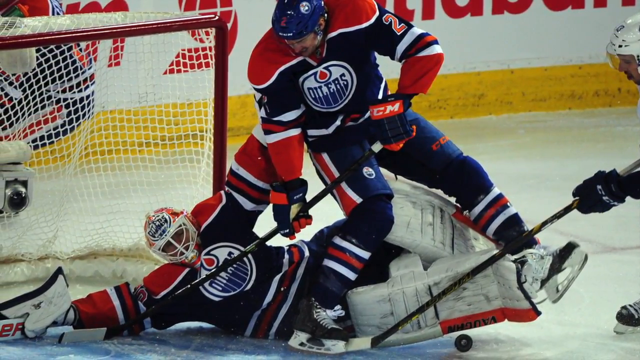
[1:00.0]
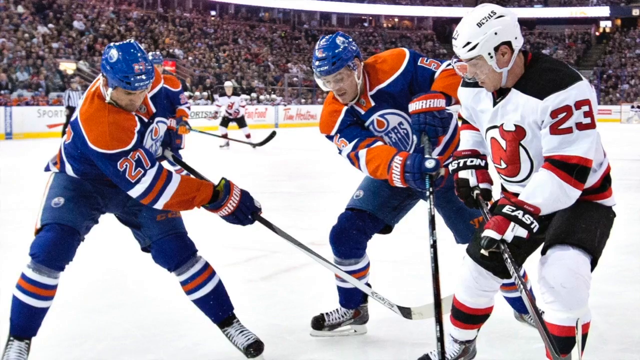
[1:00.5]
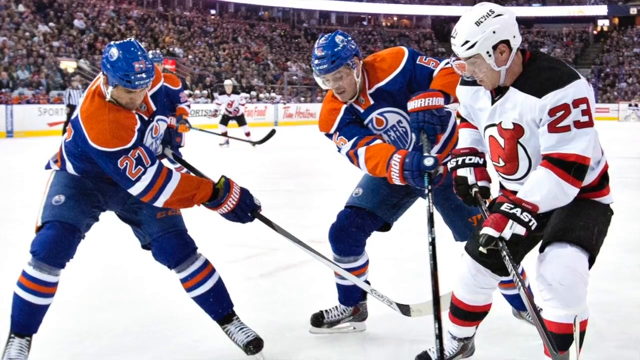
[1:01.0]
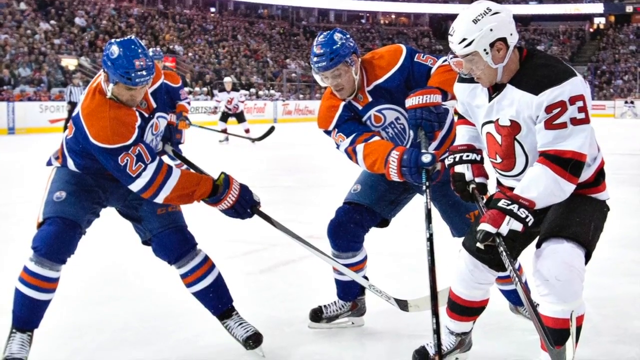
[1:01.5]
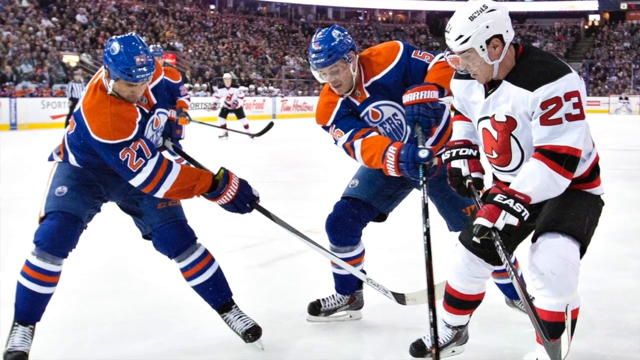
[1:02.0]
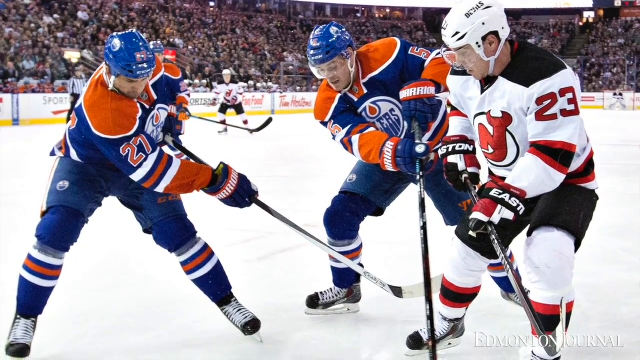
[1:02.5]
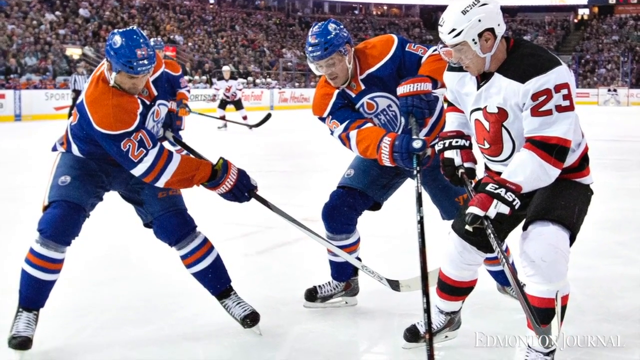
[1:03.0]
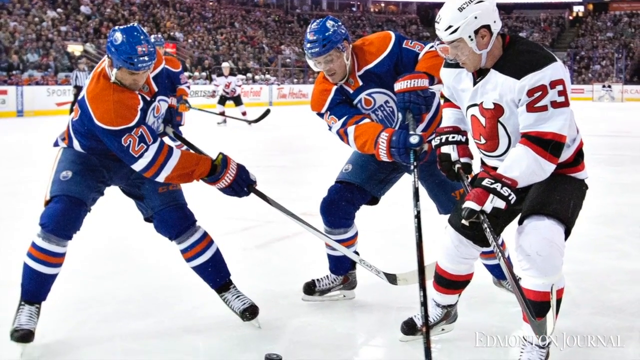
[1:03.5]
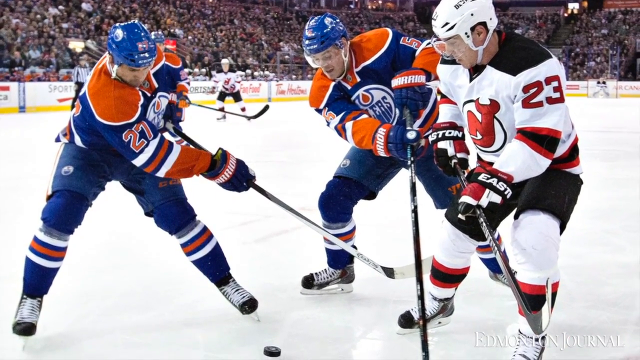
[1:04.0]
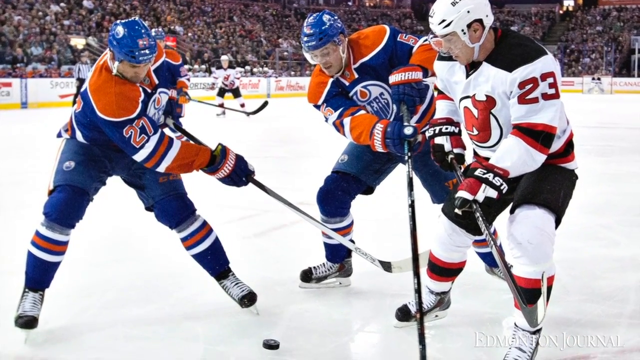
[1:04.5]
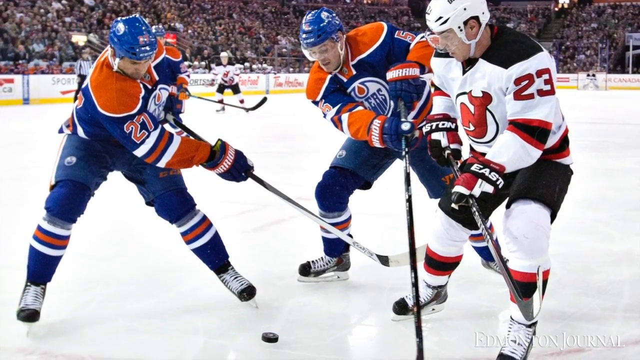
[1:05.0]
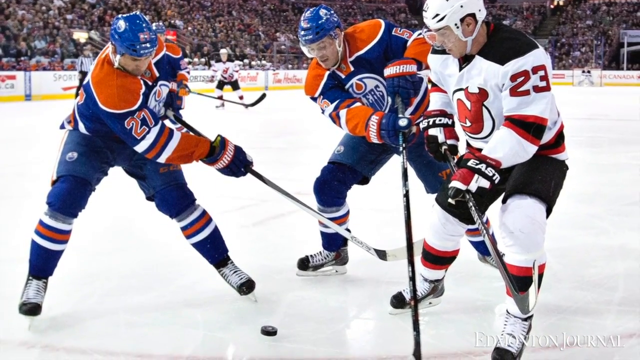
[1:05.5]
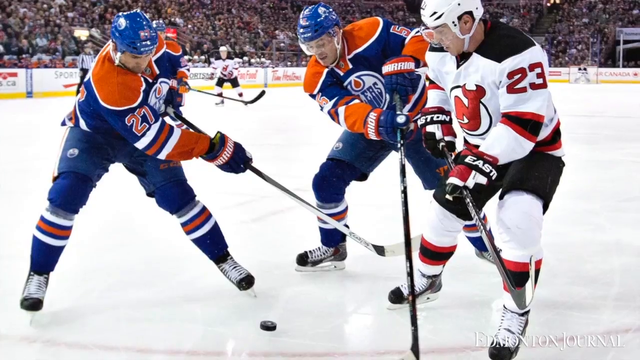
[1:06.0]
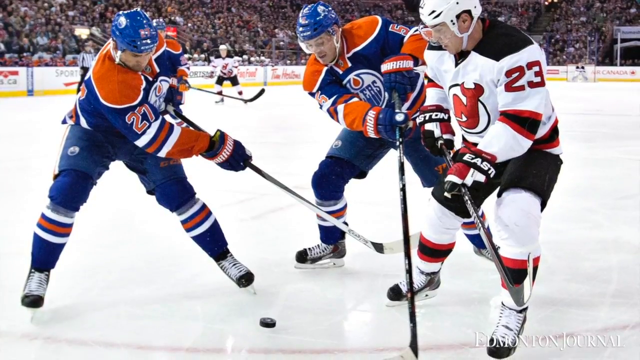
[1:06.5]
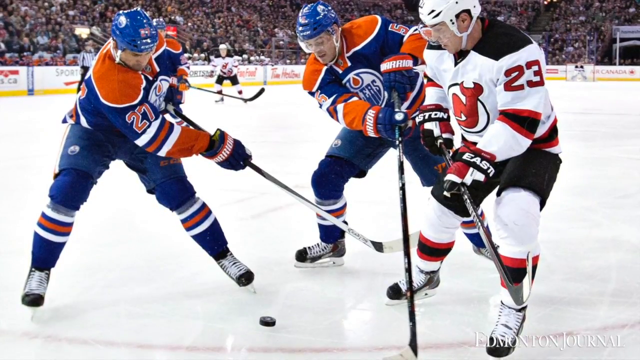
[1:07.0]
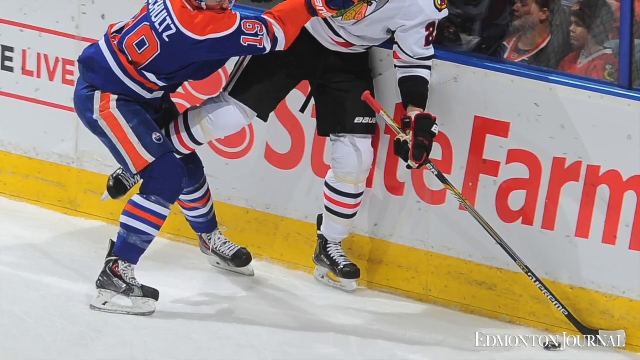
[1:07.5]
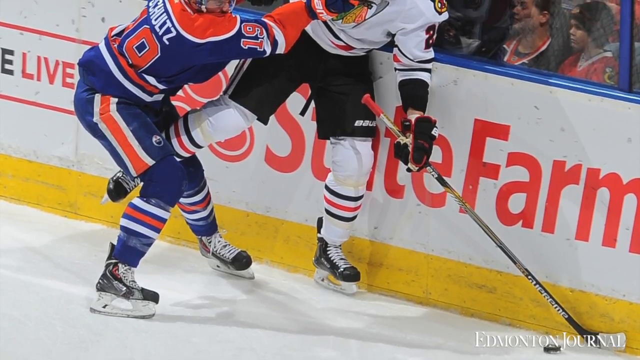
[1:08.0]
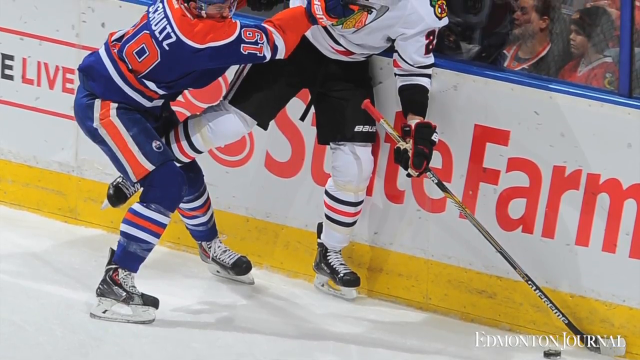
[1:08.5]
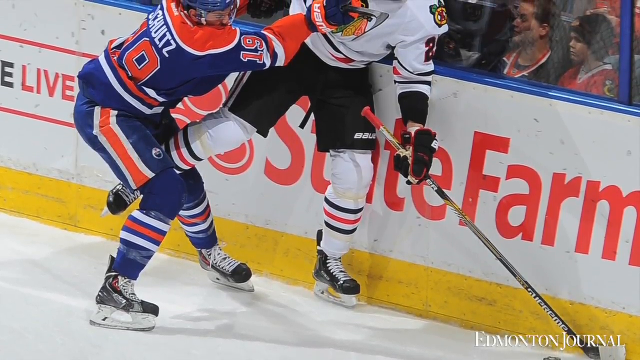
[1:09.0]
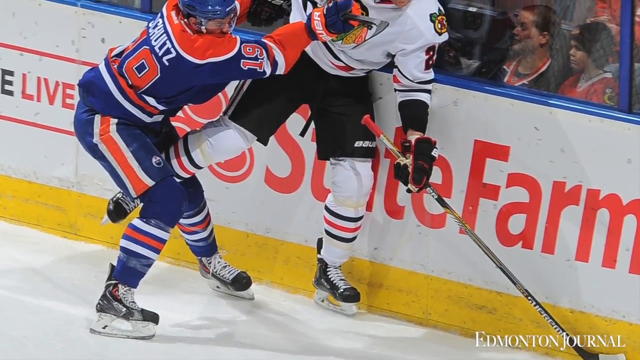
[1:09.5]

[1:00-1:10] Another still image shows two Oilers players on the left: number 27 on the far left and number 55. On the right is a New Jersey Devils player, number 23. All the players look down toward the center. The camera view shifts down, revealing a puck on the ice at the bottom center, and another New Jersey Devils player is in the background in the center. The scene changes to a battle between two hockey players: an Oilers player, number 19, on the left pushes the other player on the right up against the plexiglass and wall.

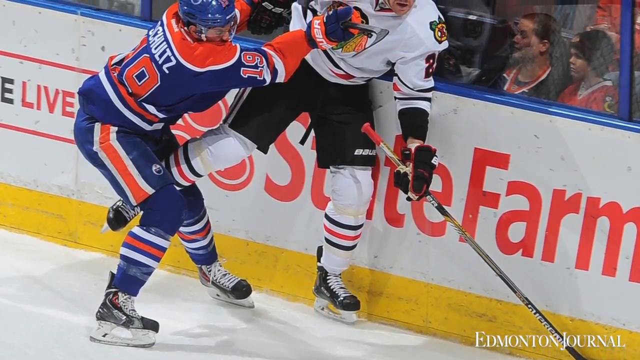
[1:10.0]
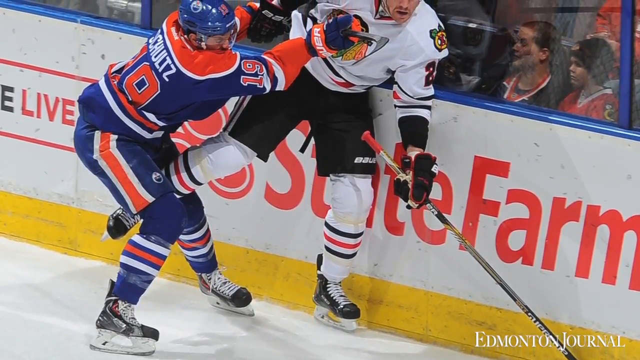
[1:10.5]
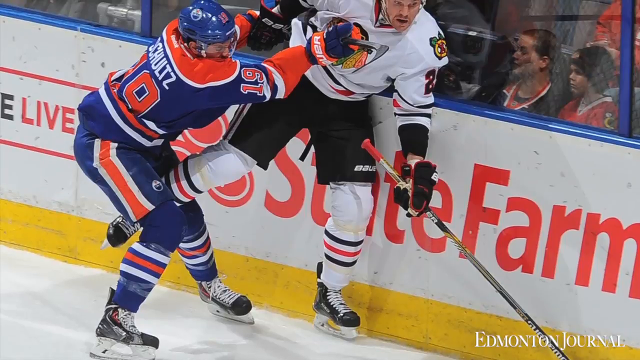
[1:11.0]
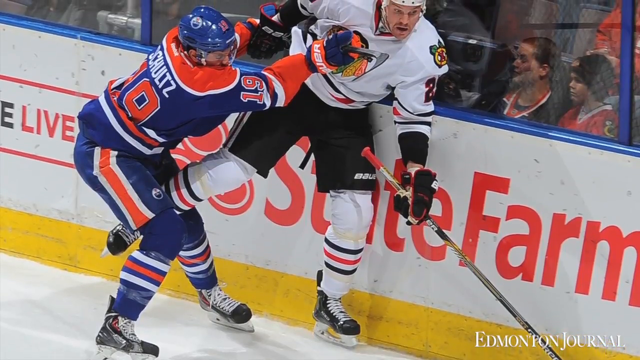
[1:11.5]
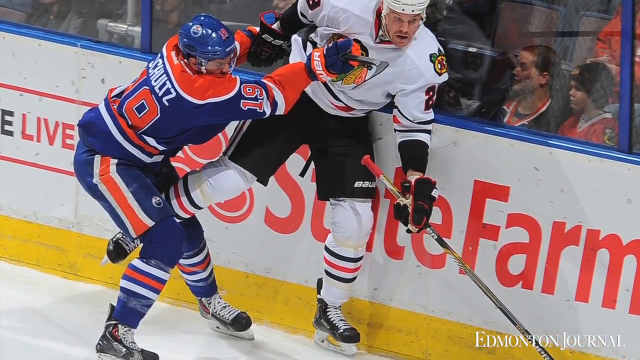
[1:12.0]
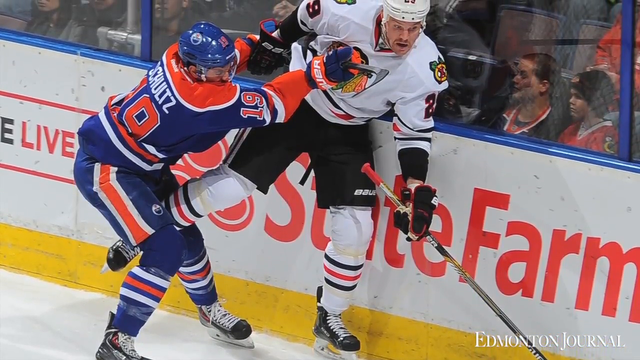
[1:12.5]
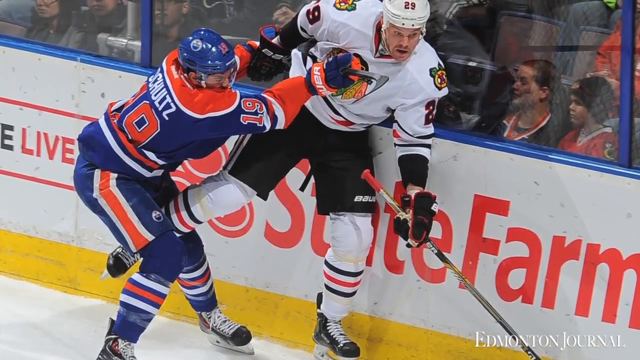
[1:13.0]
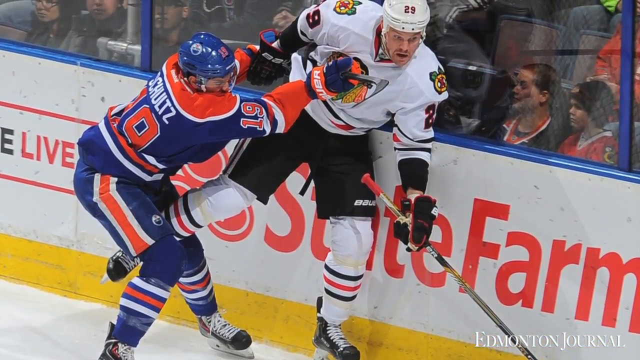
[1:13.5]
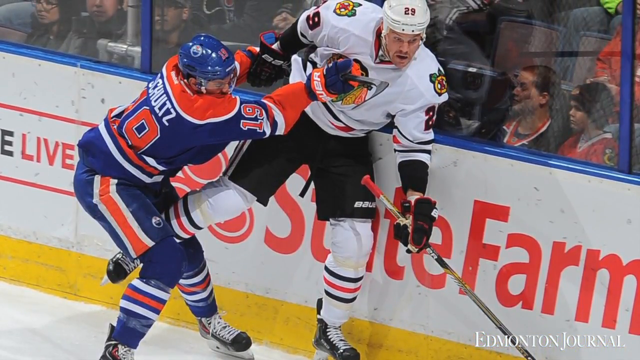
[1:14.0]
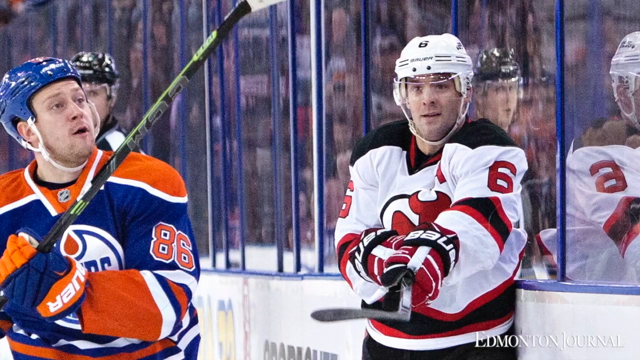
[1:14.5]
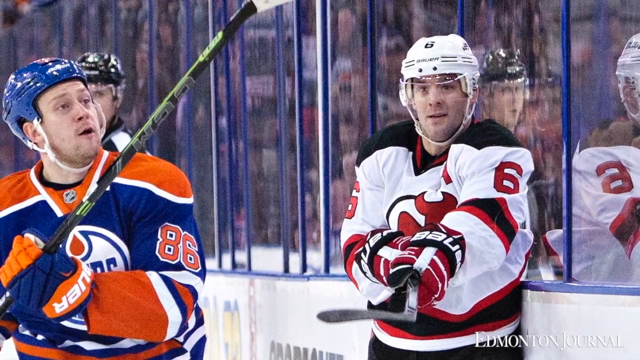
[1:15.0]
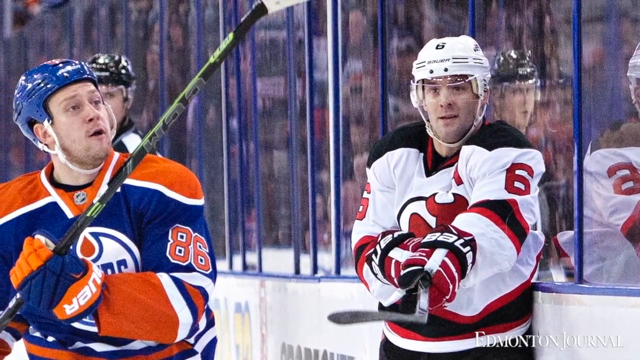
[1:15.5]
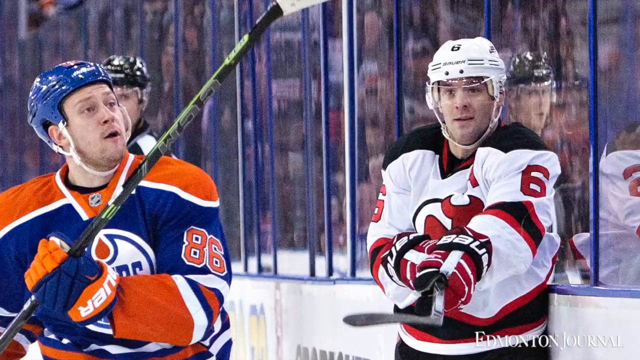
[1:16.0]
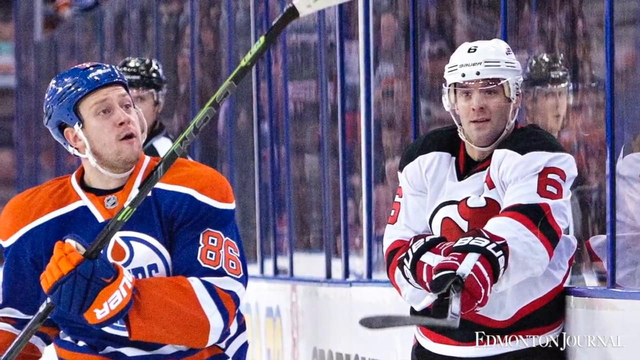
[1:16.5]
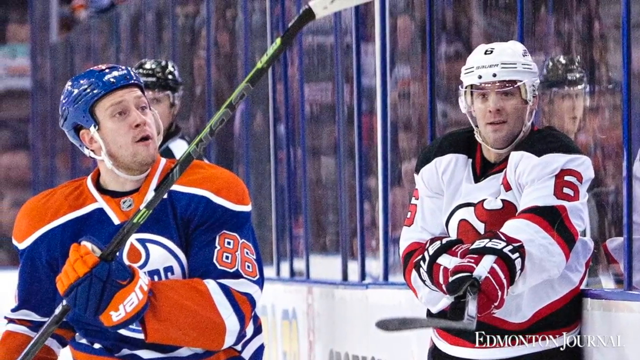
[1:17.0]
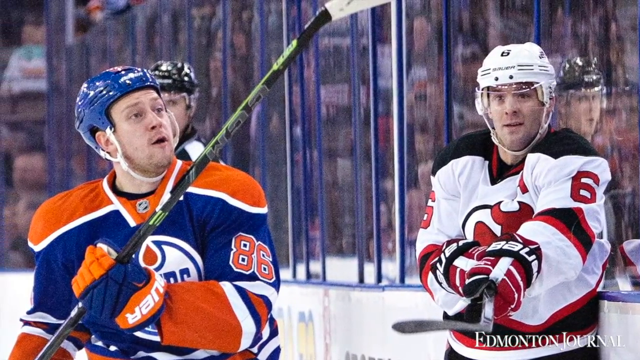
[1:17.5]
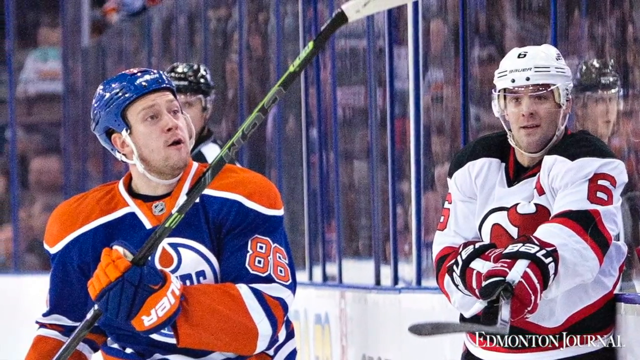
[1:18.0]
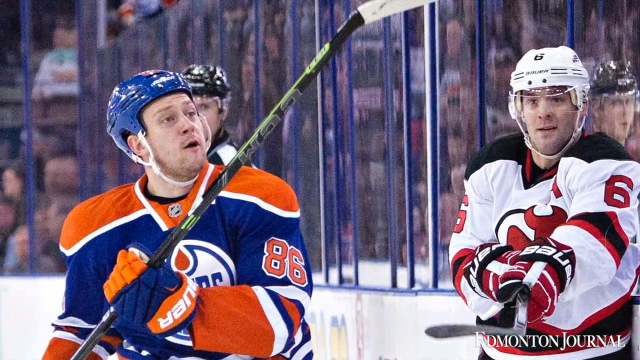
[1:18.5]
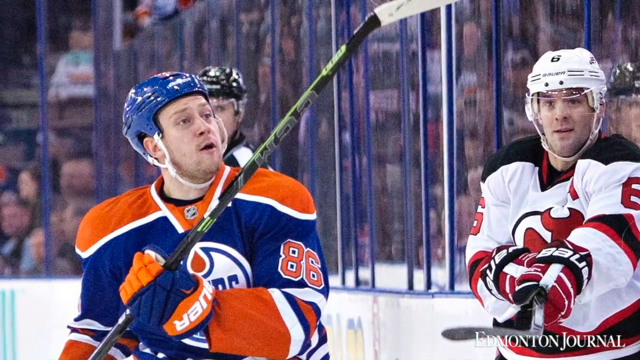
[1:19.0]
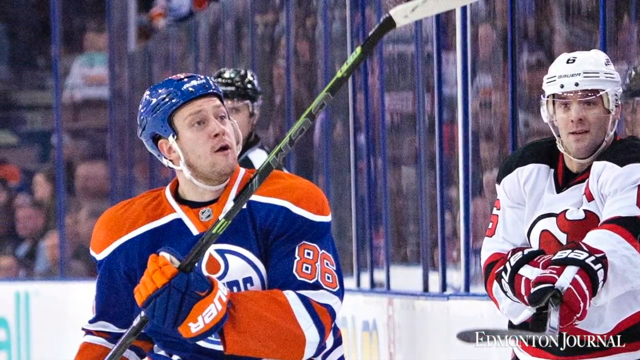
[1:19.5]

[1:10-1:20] The Oilers player on the left, number 19, has the last name Schultz. He pushes the player on the right into the wall and plexiglass, using both hands and his hockey stick. The scene changes to an Oilers player, number 86, on the left and a New Jersey Devils player on the right. A referee is behind the Oilers player. The Oilers player looks to the right, and the reflection of the referee's face is visible in the plexiglass to the right of the New Jersey player's head.